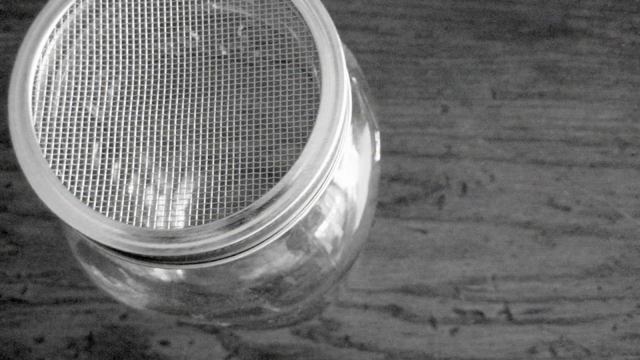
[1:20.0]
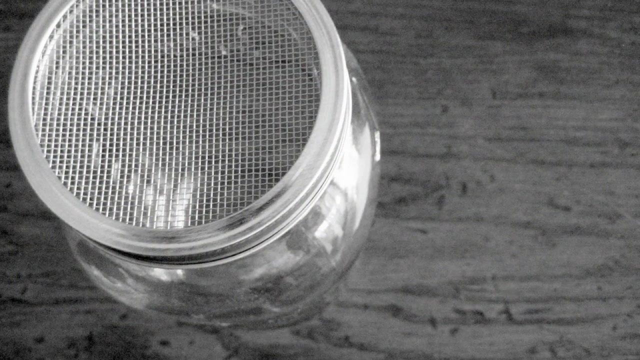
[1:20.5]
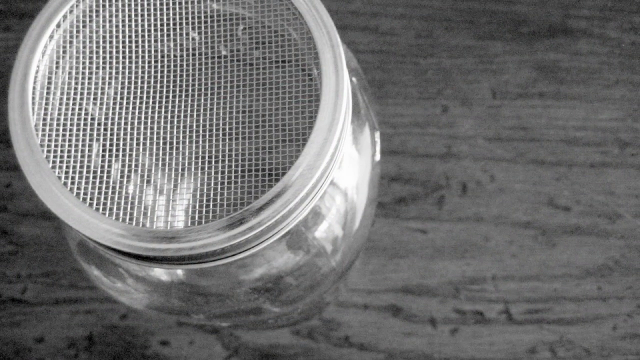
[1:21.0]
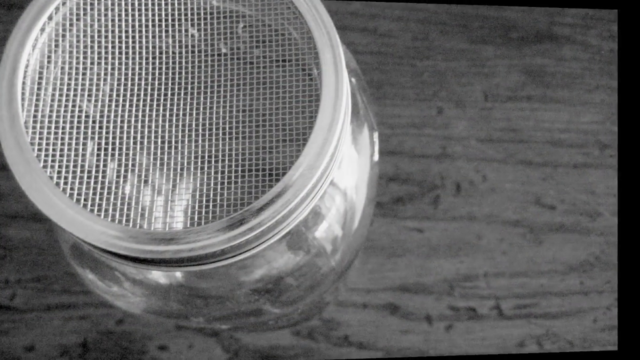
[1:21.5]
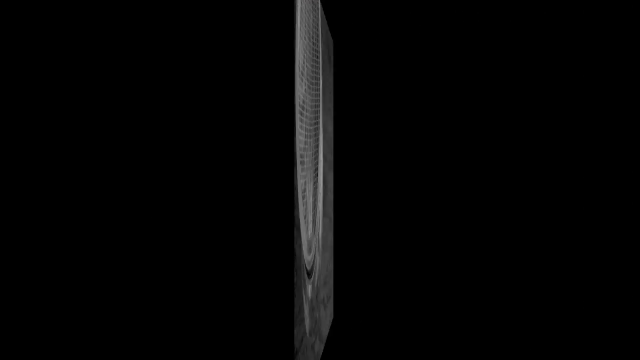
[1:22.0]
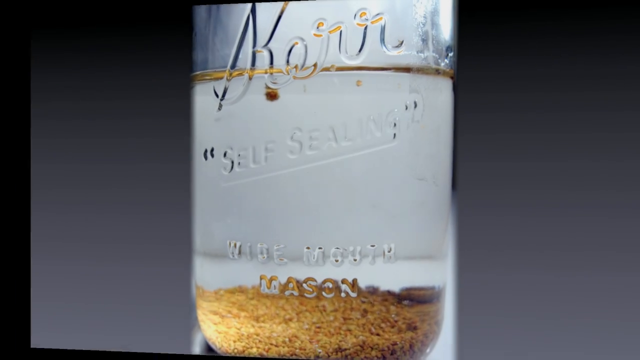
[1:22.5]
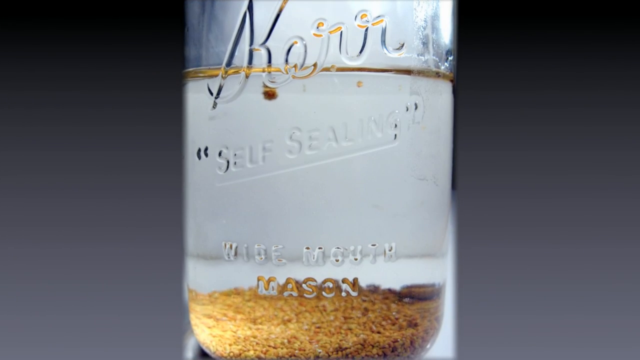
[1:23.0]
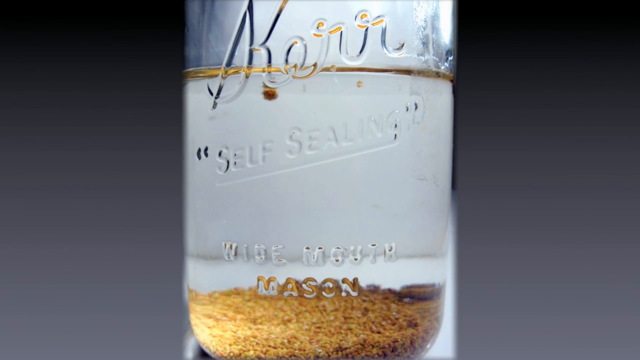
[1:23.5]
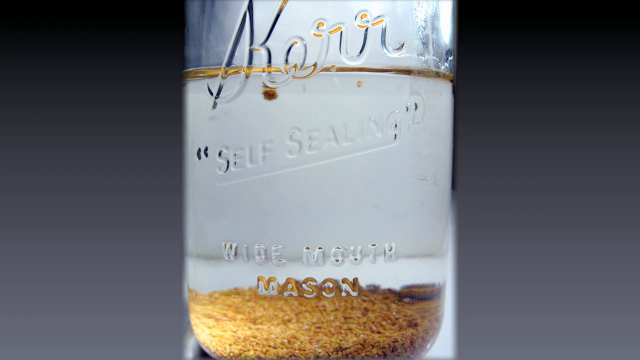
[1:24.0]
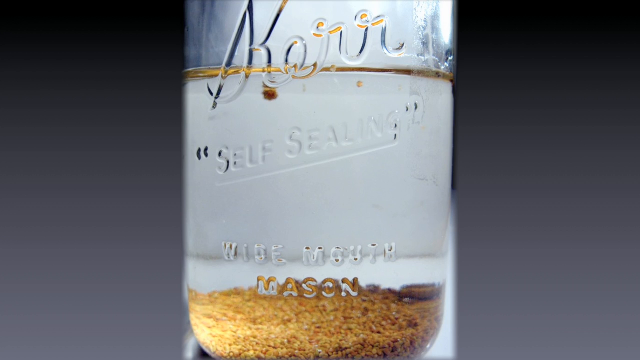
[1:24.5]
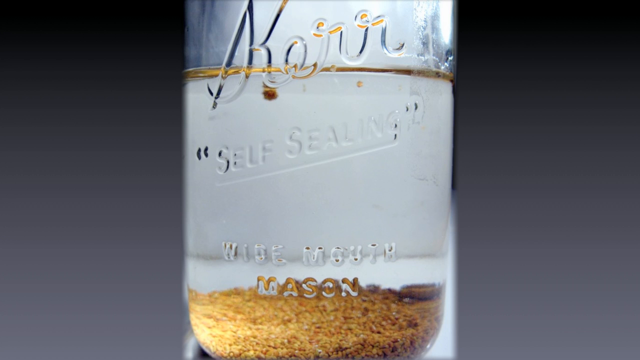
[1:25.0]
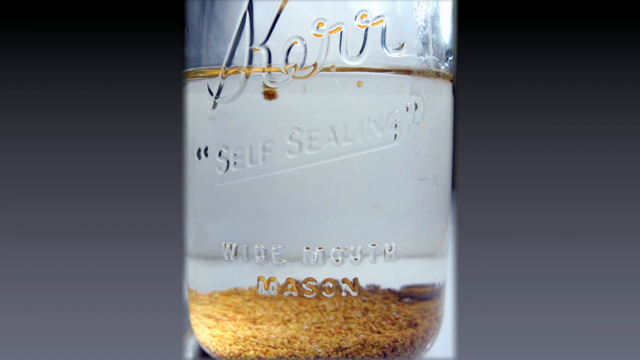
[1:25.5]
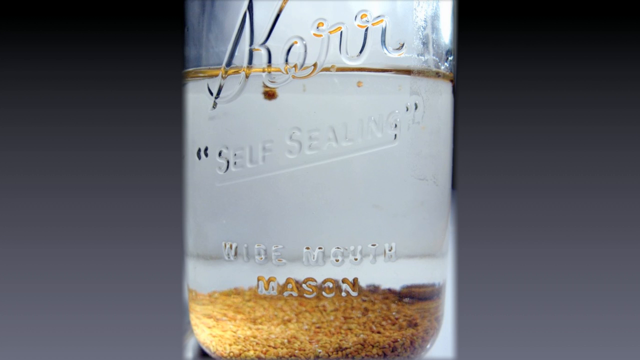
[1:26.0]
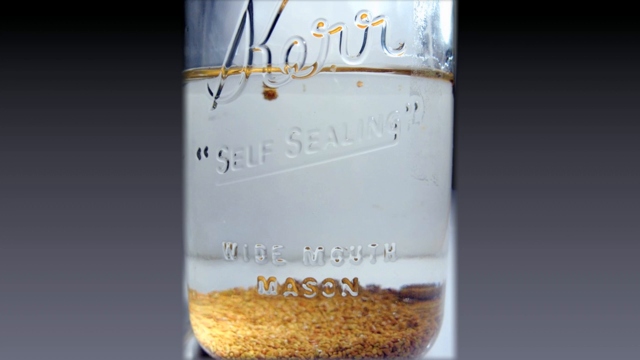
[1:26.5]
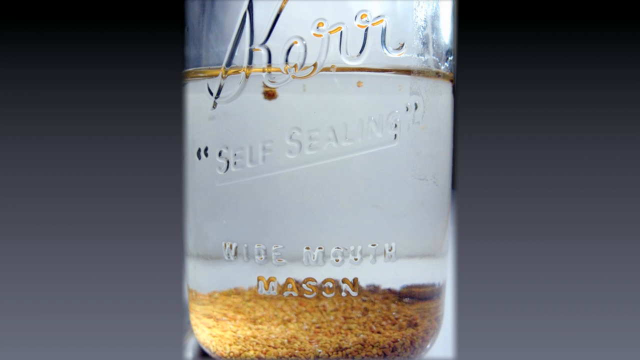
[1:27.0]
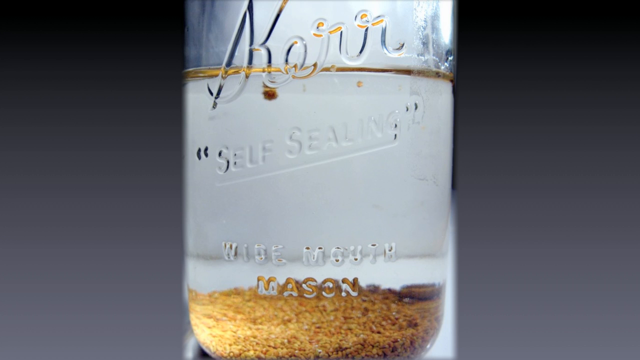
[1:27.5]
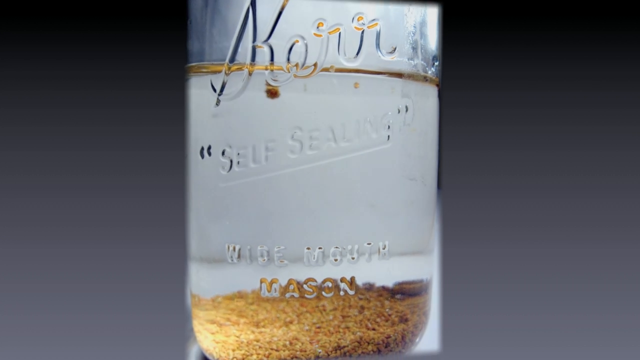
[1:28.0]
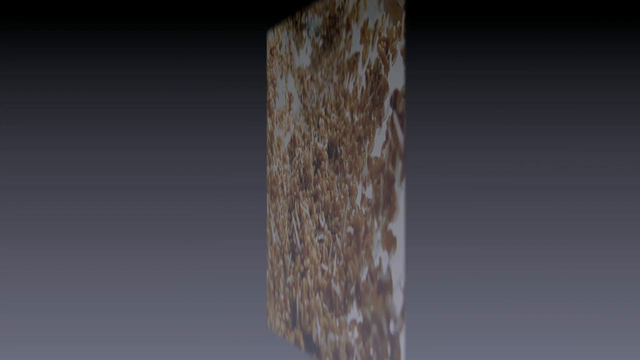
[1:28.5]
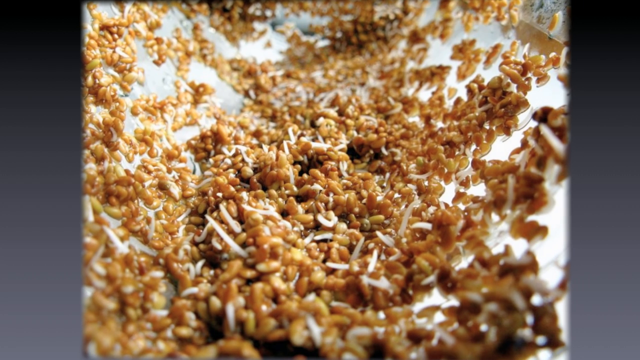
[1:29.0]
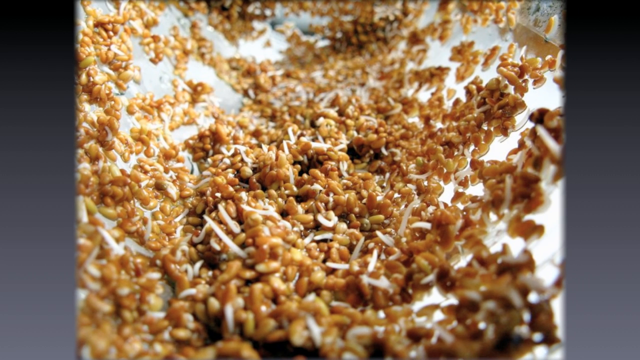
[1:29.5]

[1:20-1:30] A closer view shows the silver sieve and the small glass bottle underneath it. Some information is written on the glass, and below it are brown things and some water, not mixed. Next, brown things like the broccoli seen earlier appear mixed with a whitish liquid that could be milk; it is unclear whether it is in a cup or on a plate. The close-up shows the mixture of brown granules and white liquid.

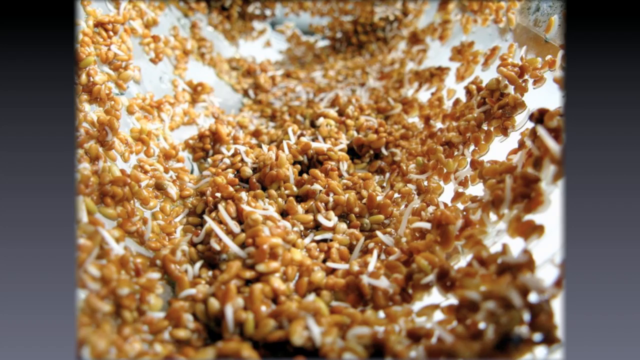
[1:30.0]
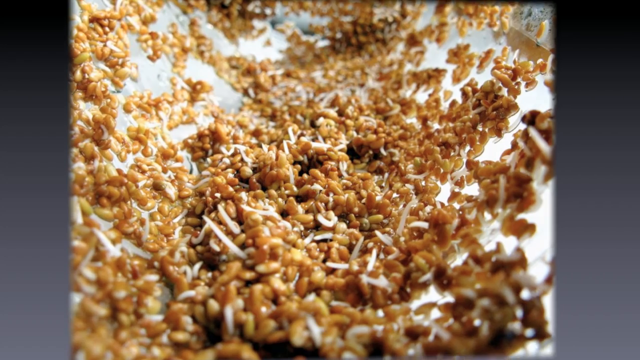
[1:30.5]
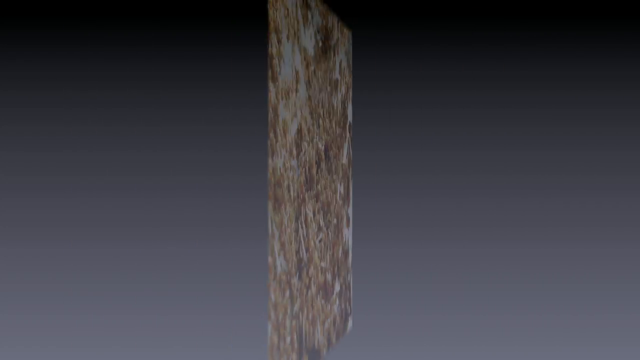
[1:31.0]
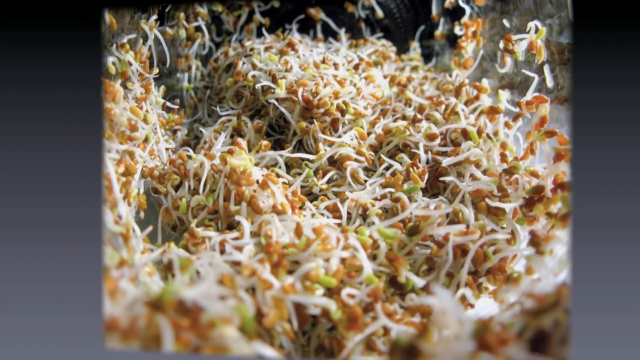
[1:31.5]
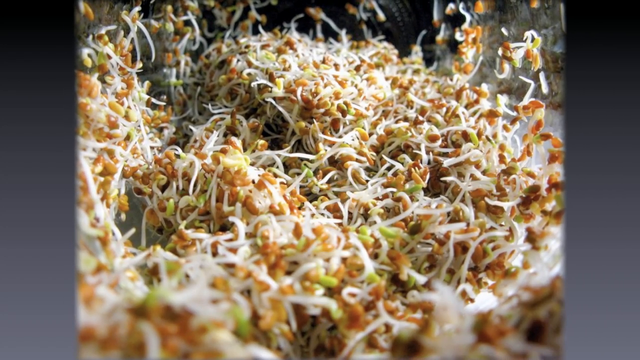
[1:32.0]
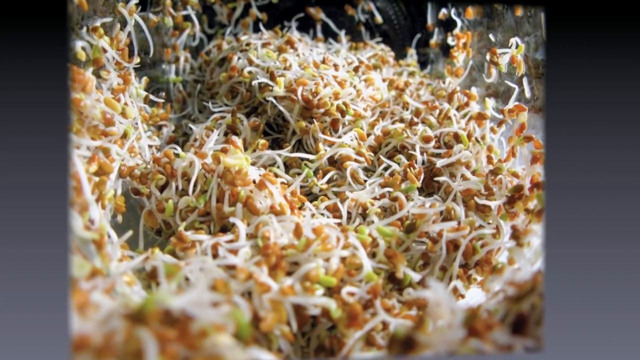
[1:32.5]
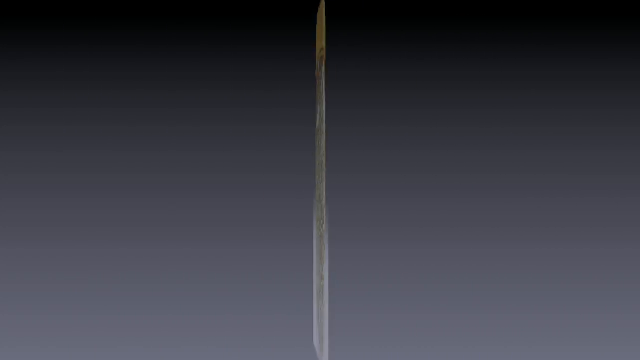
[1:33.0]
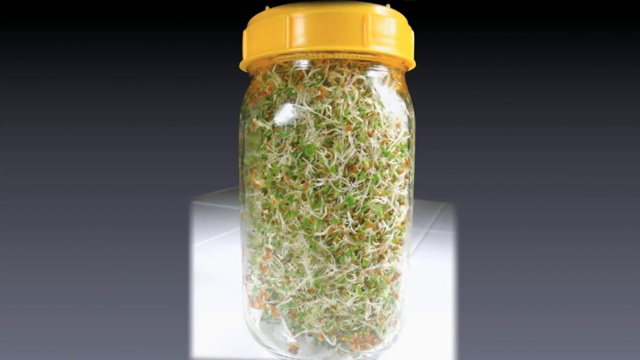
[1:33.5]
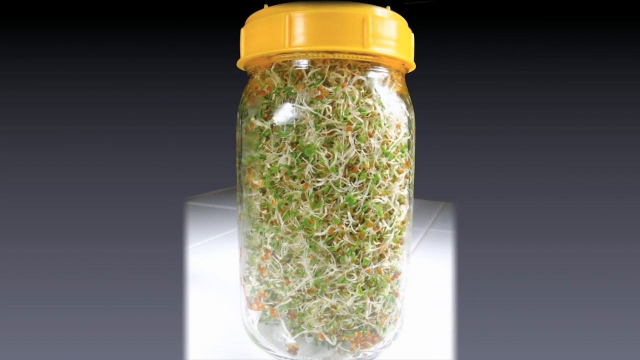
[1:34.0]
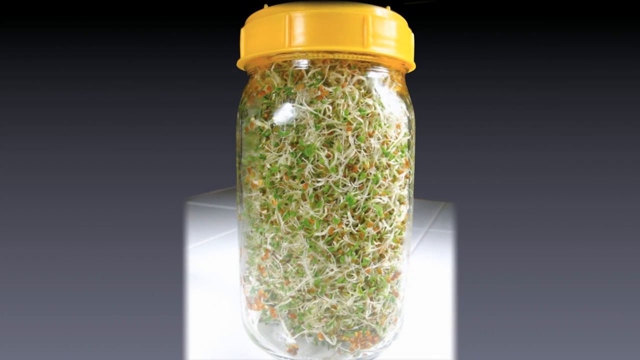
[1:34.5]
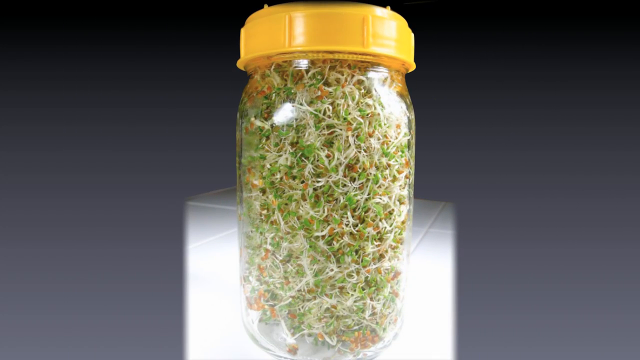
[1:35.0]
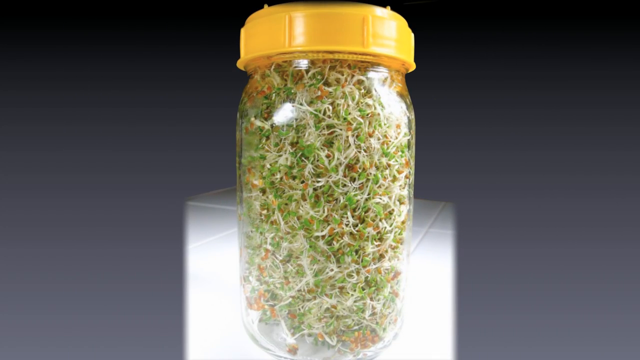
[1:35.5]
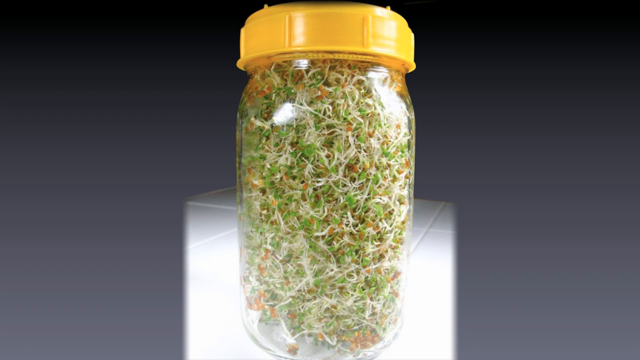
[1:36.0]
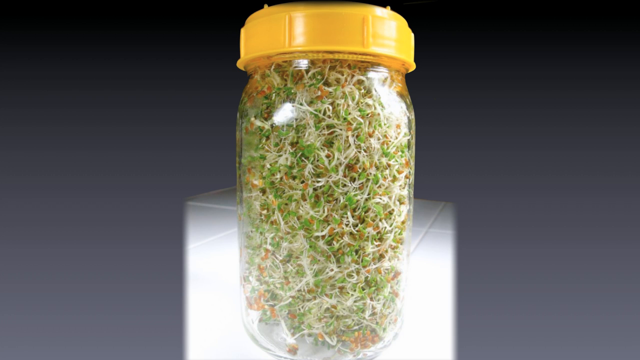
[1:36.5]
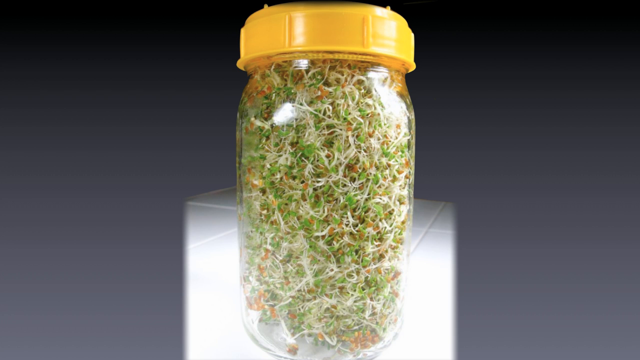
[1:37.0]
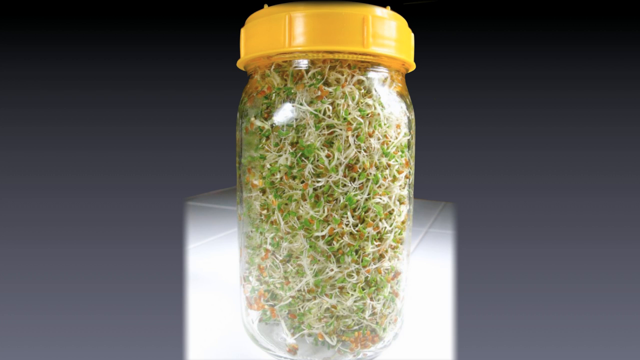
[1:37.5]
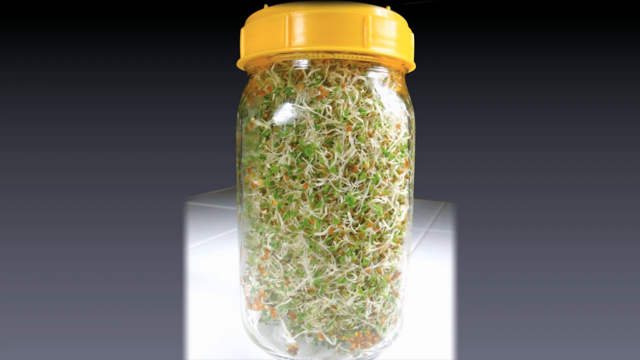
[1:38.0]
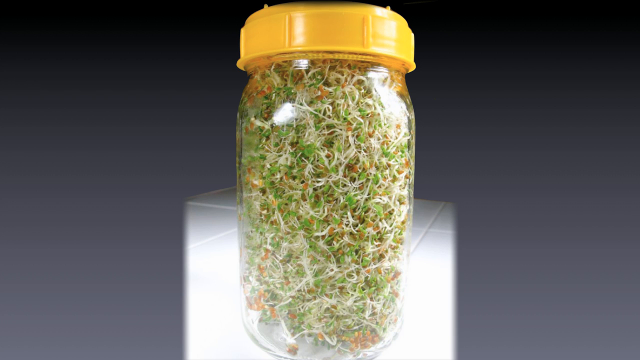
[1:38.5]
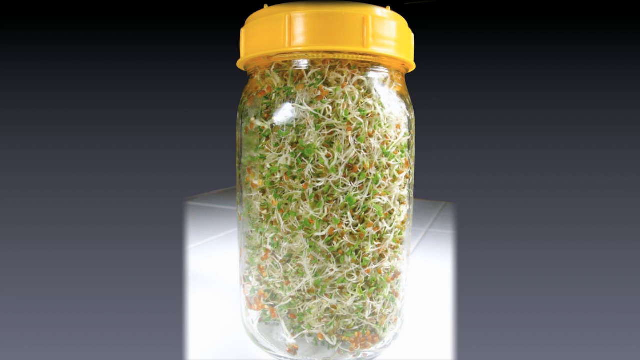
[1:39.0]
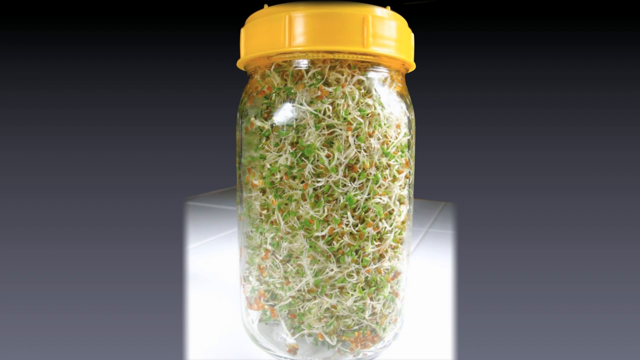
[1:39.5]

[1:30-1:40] A closer look shows the brown seeds mixed with white liquid; they look dried now, and there are strips of white things. Next, the mixture has been put together in a glass bottle with a lid, white and brown. The white things inside are long, white like rice but a bit longer than normal rice, mixed with the brown. Later a transparent glass bottle with yellow lids appears with the mixture inside.